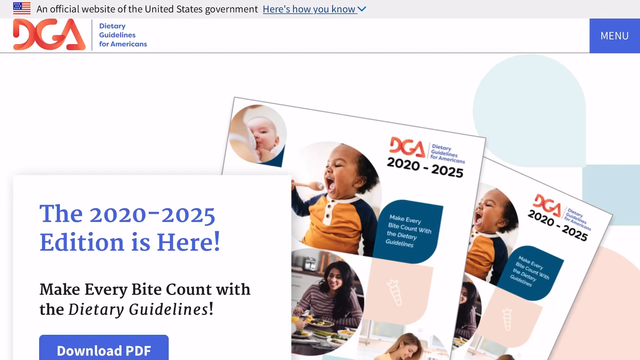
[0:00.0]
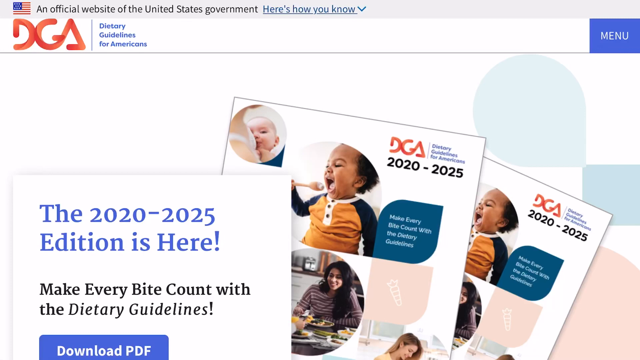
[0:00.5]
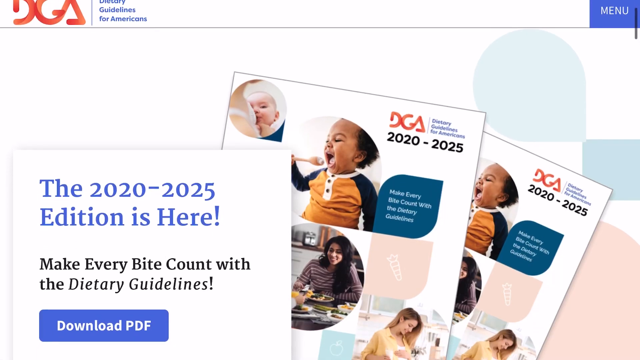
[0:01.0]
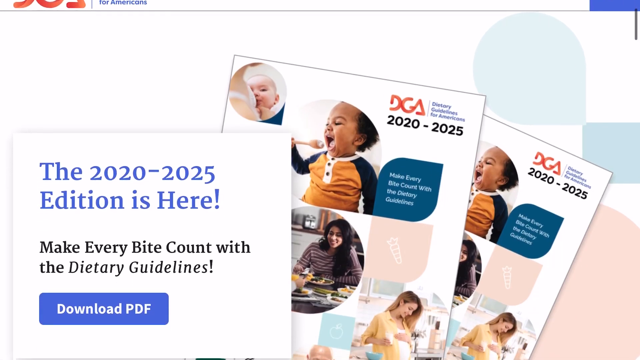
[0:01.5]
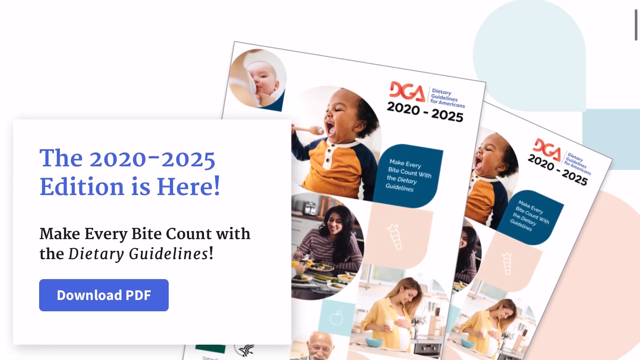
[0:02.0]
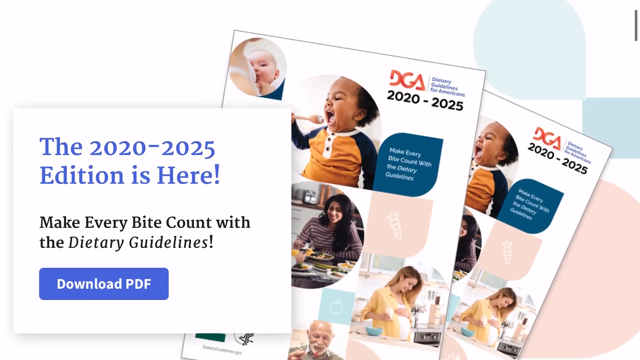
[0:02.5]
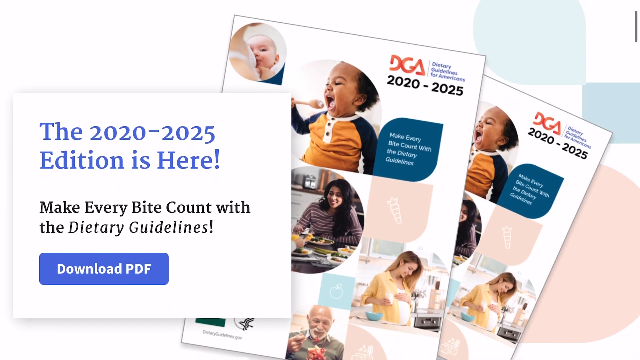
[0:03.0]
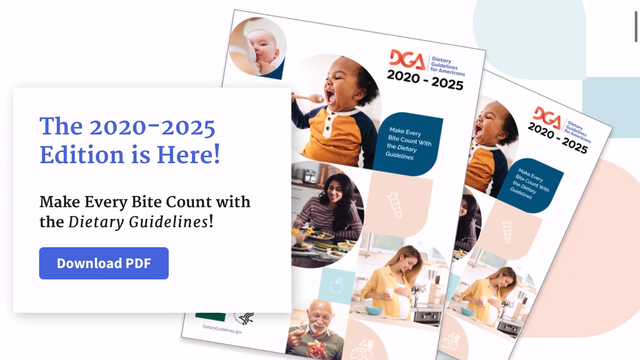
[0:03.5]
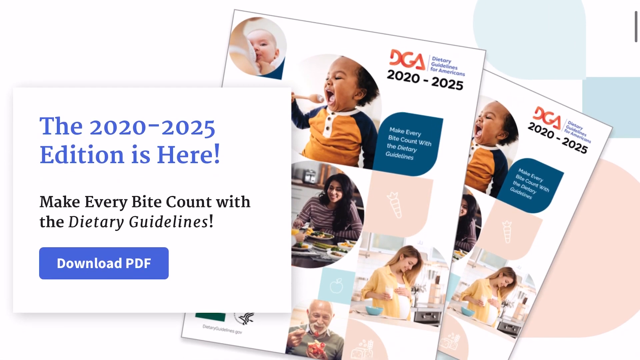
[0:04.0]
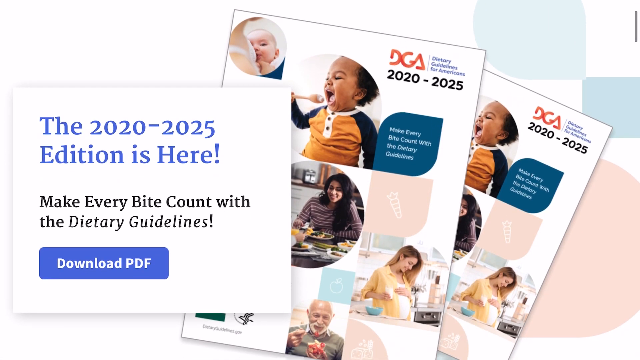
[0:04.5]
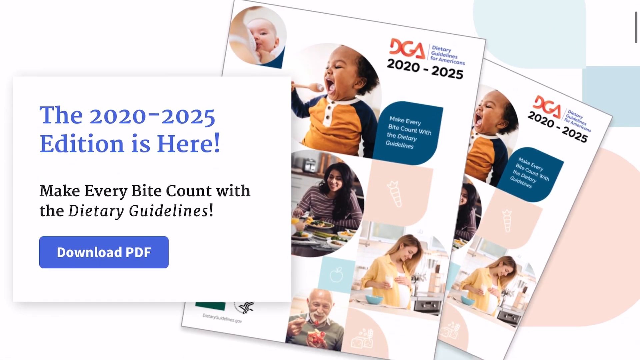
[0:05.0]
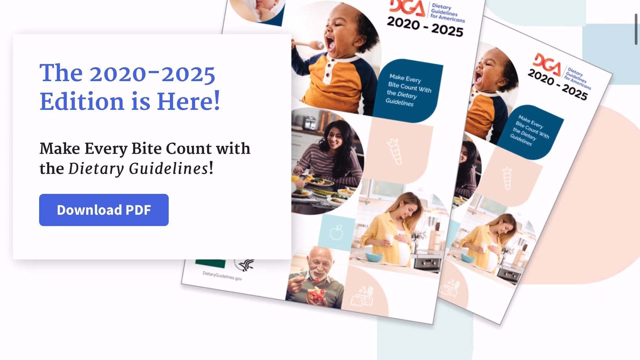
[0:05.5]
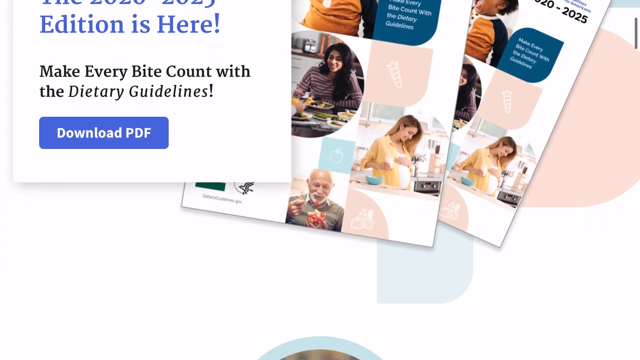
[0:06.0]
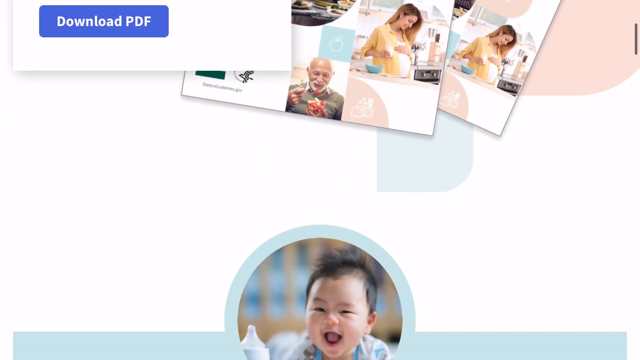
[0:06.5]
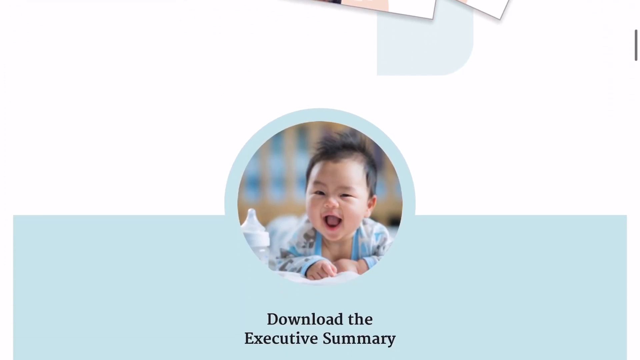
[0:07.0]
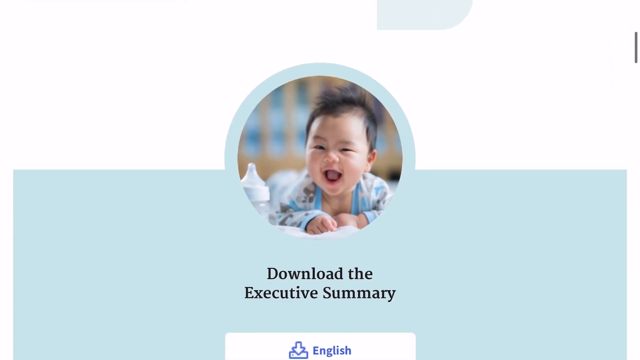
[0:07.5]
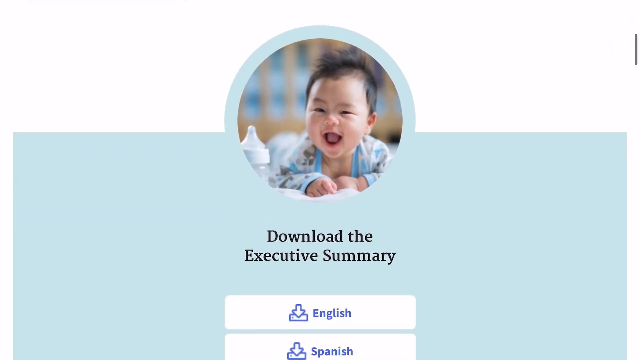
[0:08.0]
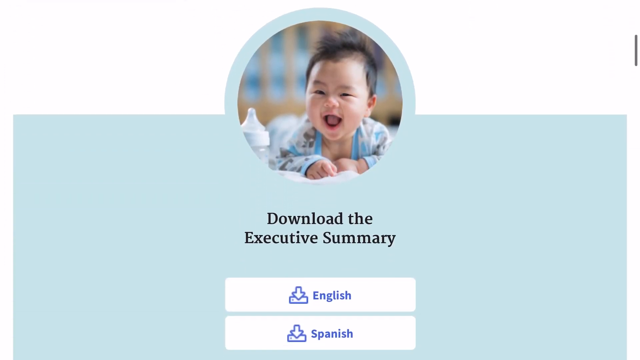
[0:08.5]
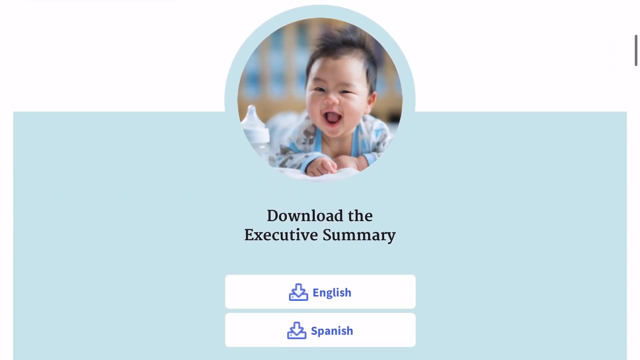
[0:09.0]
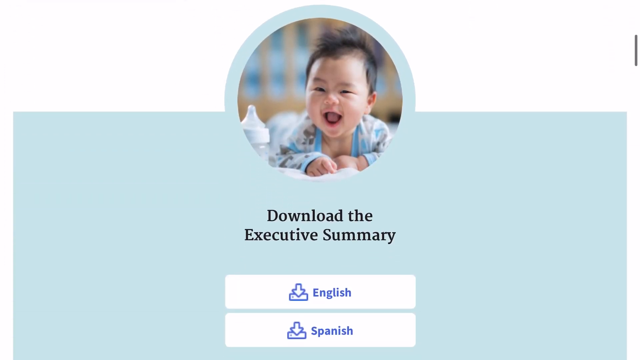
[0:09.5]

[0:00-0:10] A portion of a brochure from the official website of the United States government for the Dietary Guidelines for Americans, DGA, appears. The 2020 through 2025 edition is featured, and the text says "make every bite count with these dietary guidelines." The visible part of the brochure shows a mother holding an infant, a toddler holding a spoon and trying to feed himself, and a woman with long dark hair. There is a PDF box that can be clicked to download the information. As the page scrolls, a small baby lying on his belly and smiling appears with the caption "download the executive summary," with options to download it in English or Spanish.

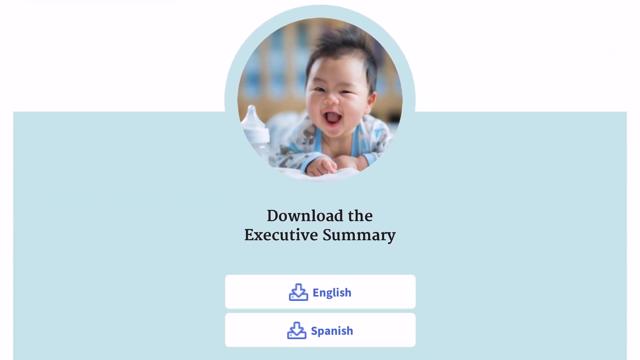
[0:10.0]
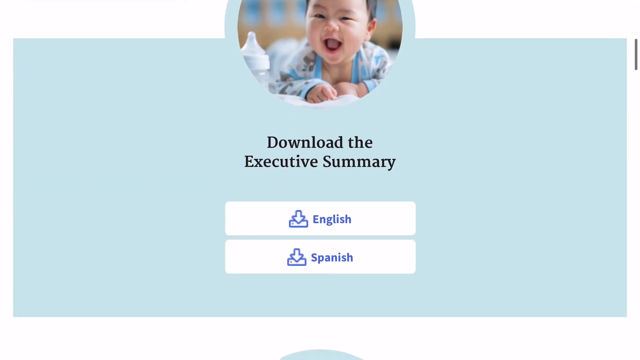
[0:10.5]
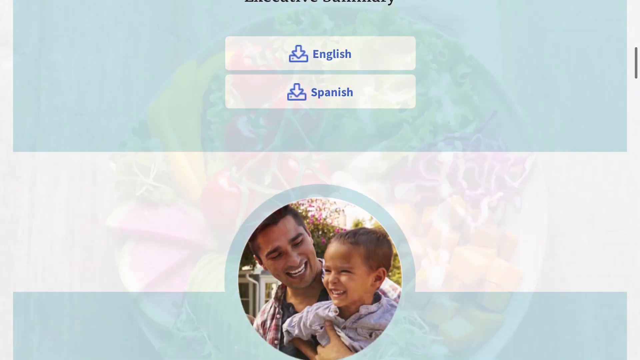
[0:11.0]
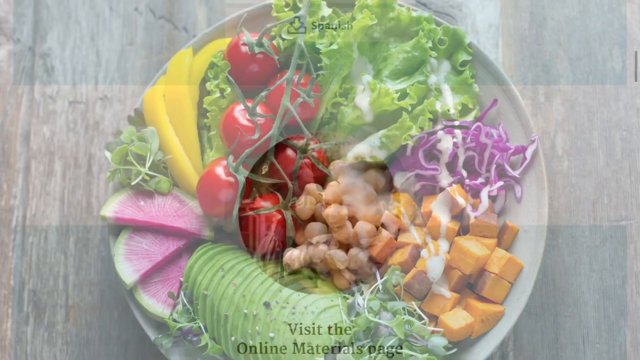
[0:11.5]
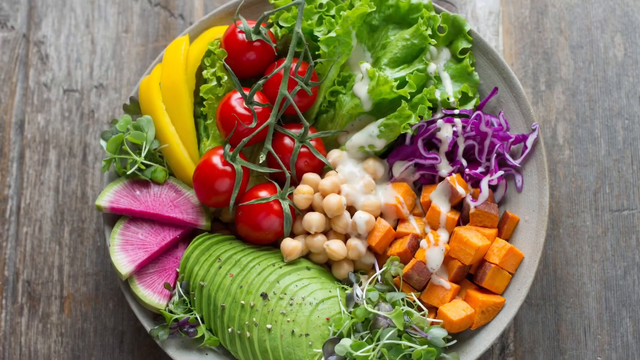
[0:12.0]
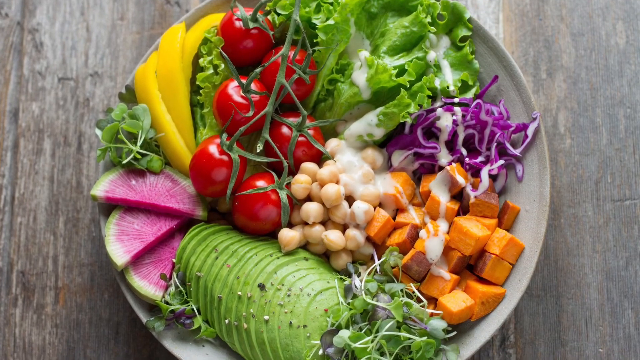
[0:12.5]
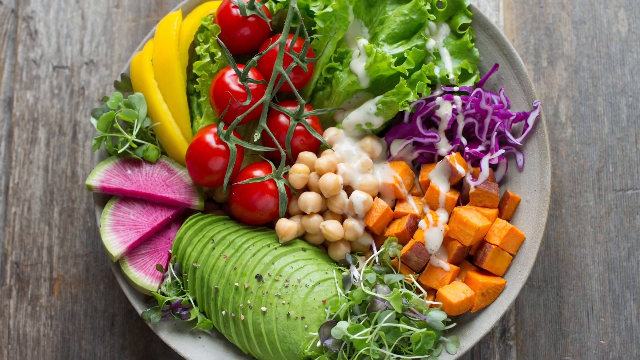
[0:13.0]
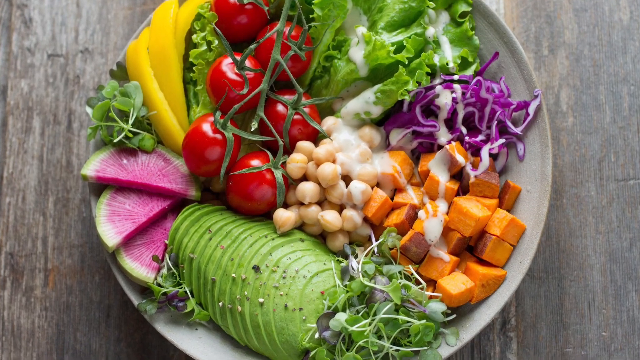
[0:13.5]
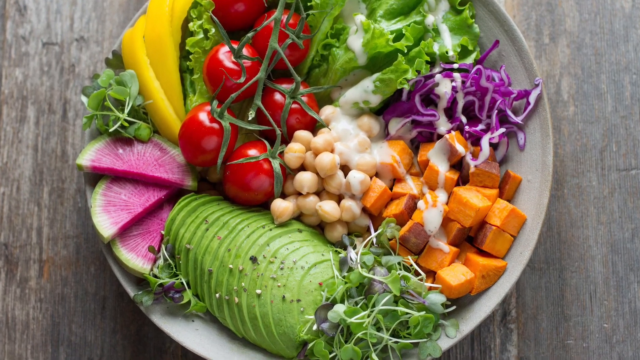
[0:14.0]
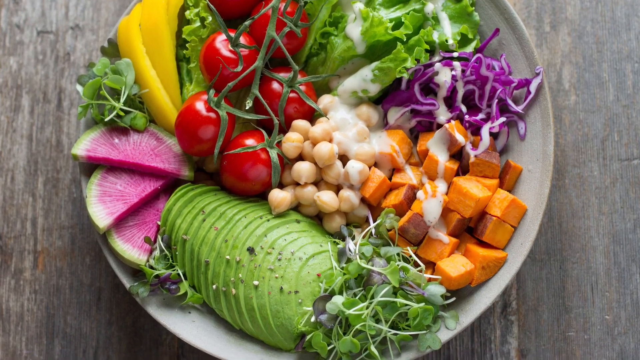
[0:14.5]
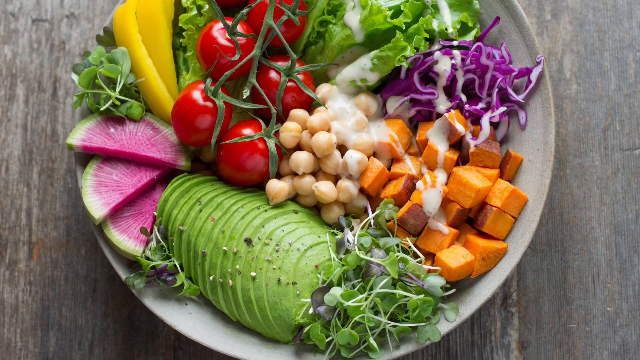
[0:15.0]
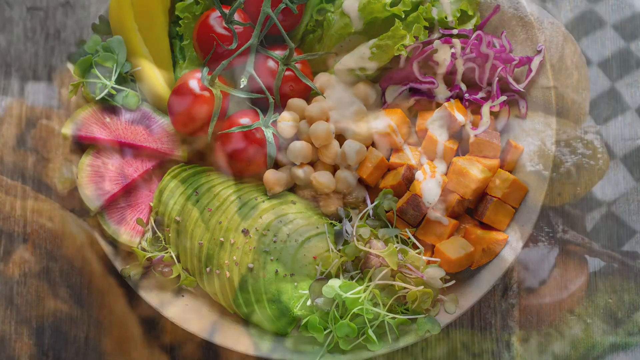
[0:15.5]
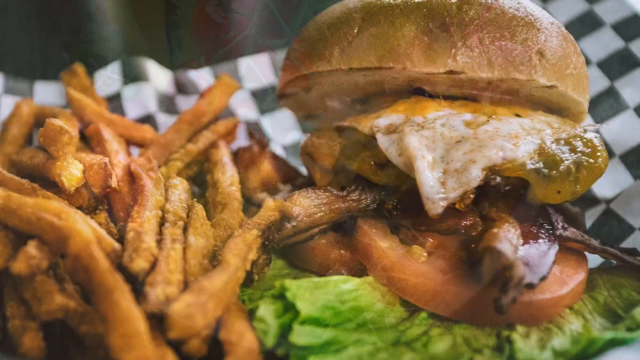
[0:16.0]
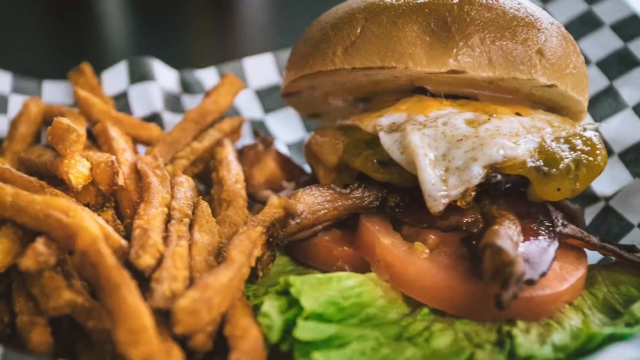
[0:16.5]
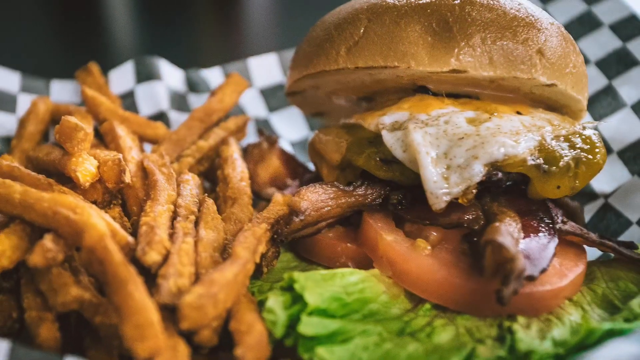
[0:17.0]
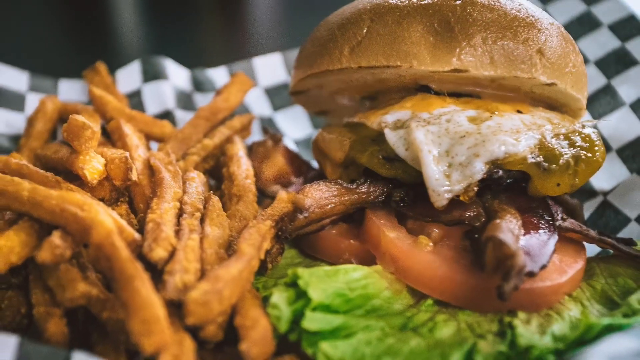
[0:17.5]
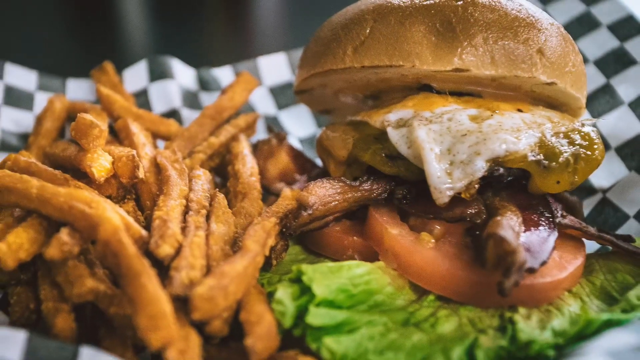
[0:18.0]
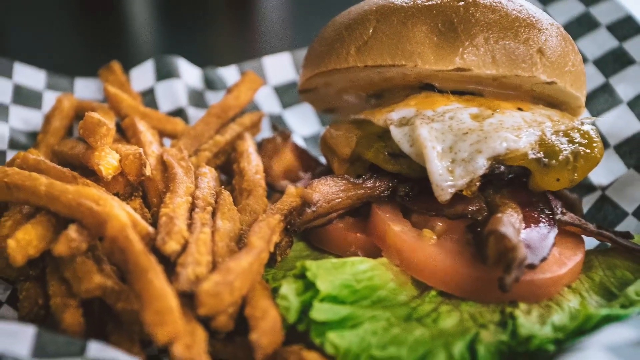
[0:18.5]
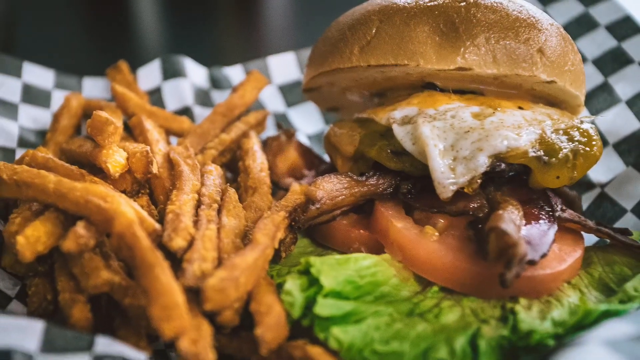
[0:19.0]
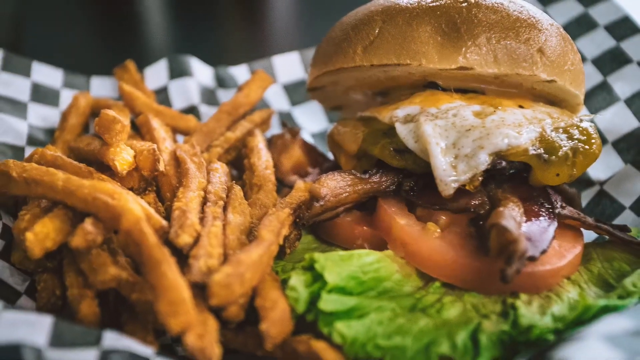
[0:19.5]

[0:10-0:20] A picture shows a small baby lying on his belly with a big smile on his face, and under the picture are the words "download the executive summary" with boxes to click for English or for Spanish. Next comes a circular plate full of vegetables. At the top, at 12 o'clock, there are little tomatoes. Continuing clockwise, there is some lettuce at one o'clock and some shredded purple cabbage at approximately three o'clock. At four or five o'clock there are either chopped carrots or squash, and at five to six o'clock there is what appears to be another green vegetable. At seven to eight o'clock there is what looks like sliced avocado, and at eight to nine o'clock there is what seems to be some other fresh fruit or vegetable with a pink interior. At 10 to 11 o'clock there is what looks like a slice of yellow fruit with some greenery, and chickpeas are in the center of the plate. The next screen shows a loaded hamburger with cheese, bacon, lettuce and tomato, along with some fries.